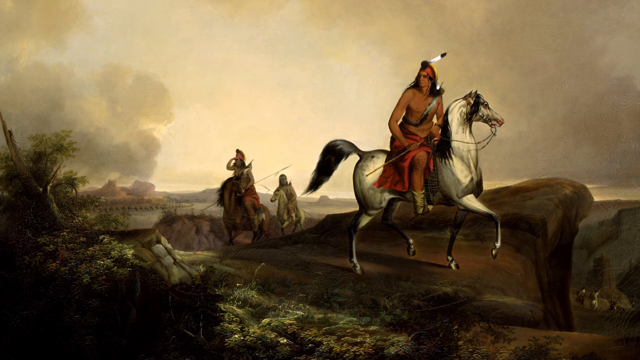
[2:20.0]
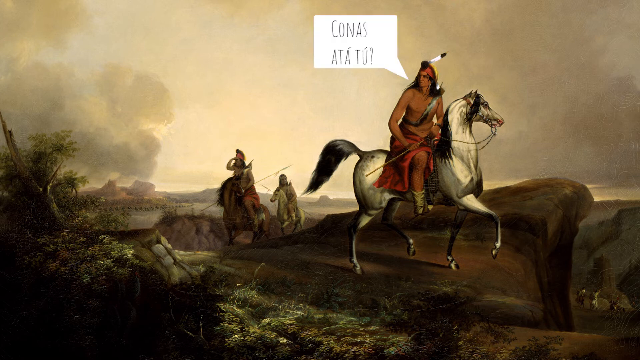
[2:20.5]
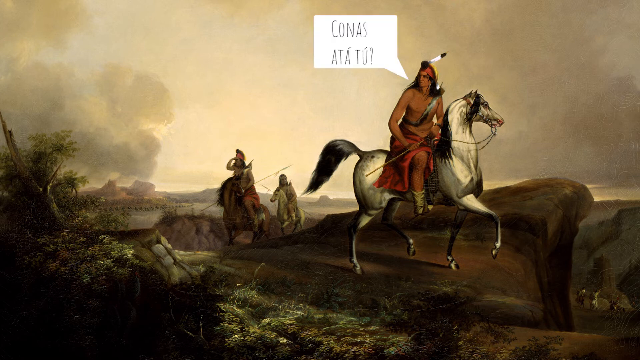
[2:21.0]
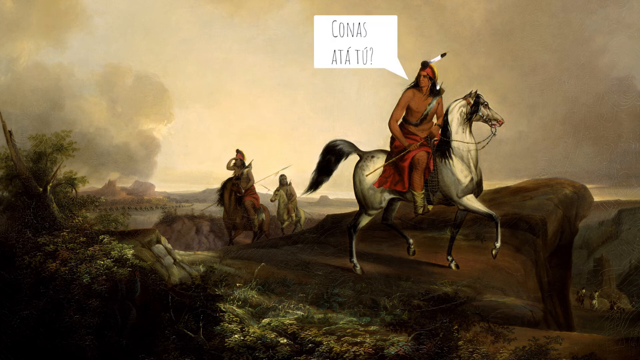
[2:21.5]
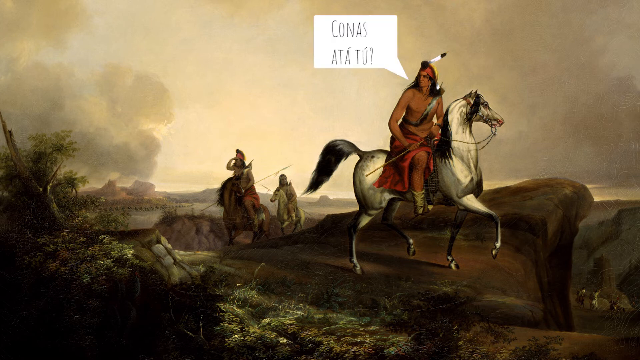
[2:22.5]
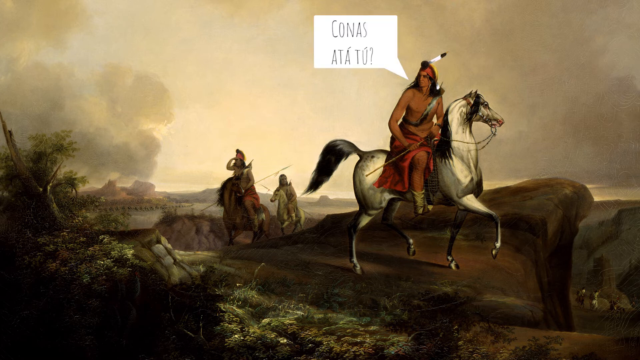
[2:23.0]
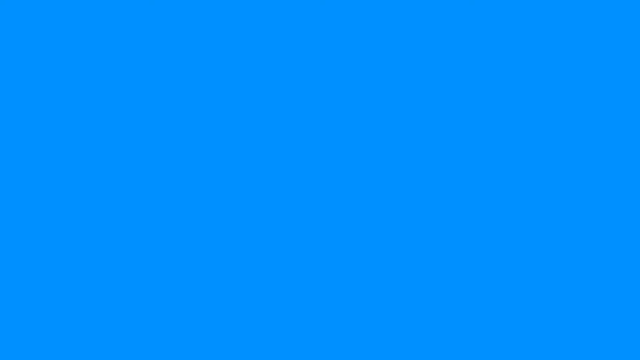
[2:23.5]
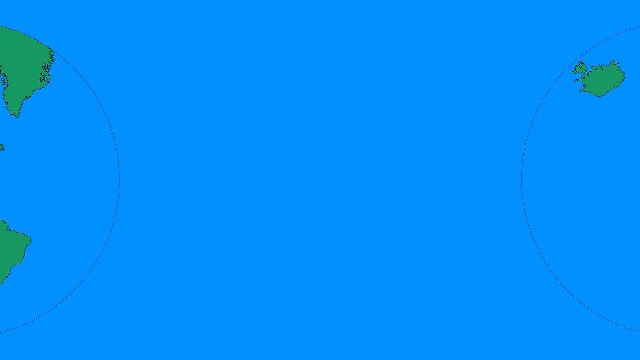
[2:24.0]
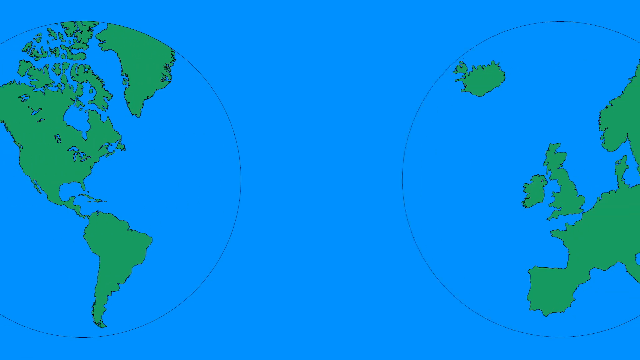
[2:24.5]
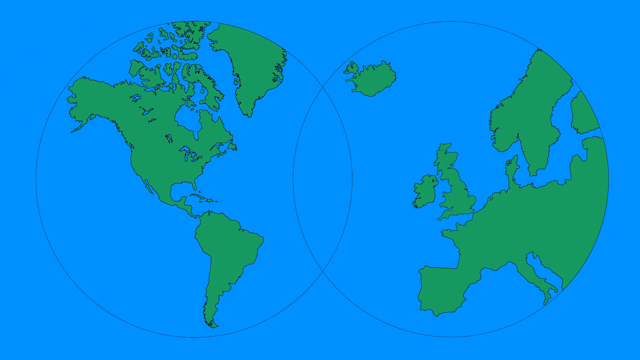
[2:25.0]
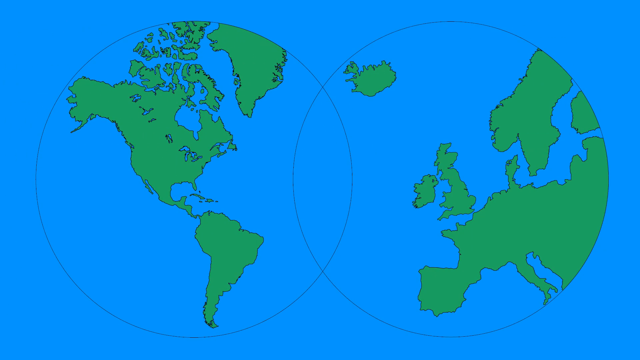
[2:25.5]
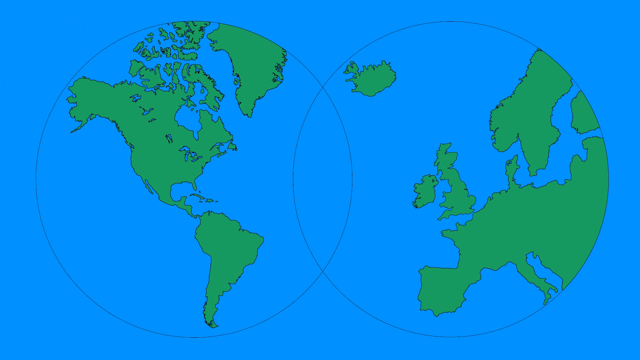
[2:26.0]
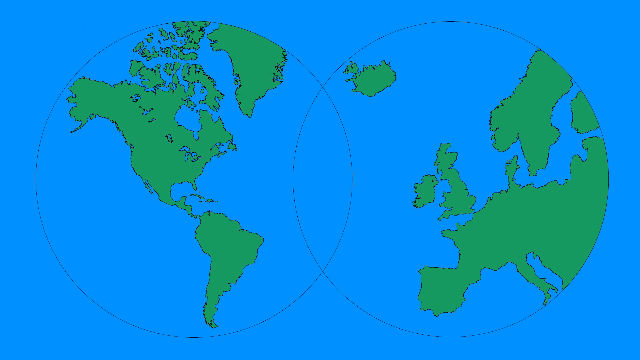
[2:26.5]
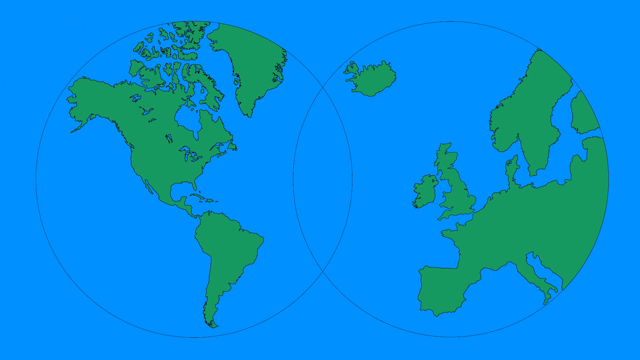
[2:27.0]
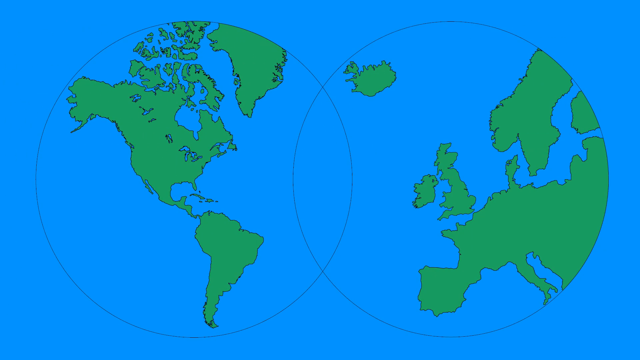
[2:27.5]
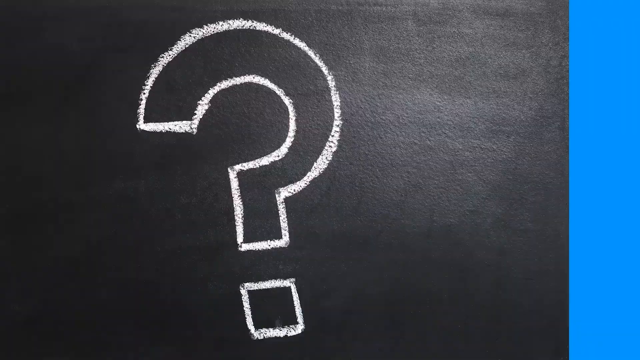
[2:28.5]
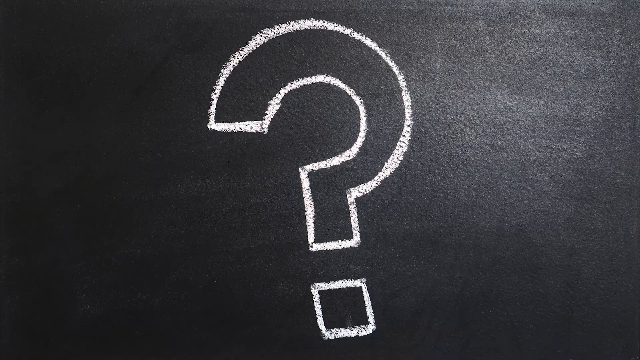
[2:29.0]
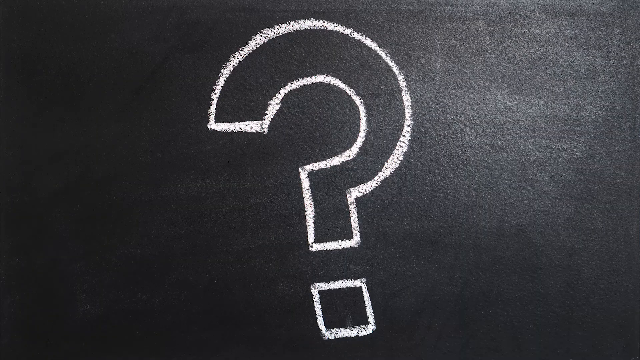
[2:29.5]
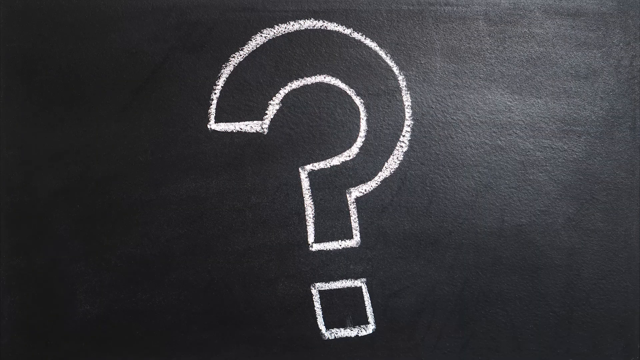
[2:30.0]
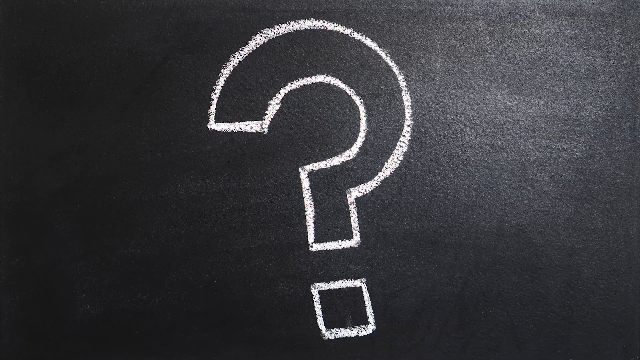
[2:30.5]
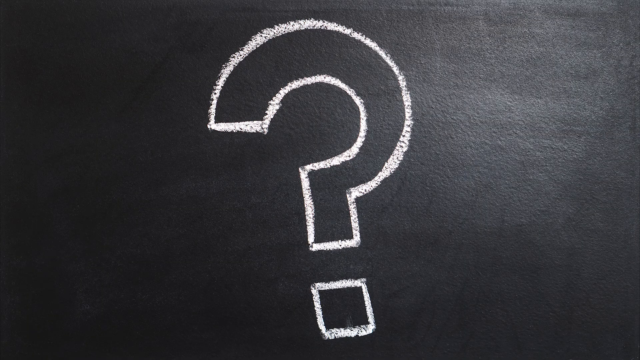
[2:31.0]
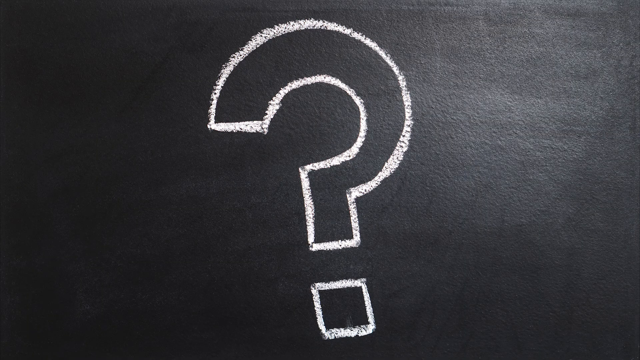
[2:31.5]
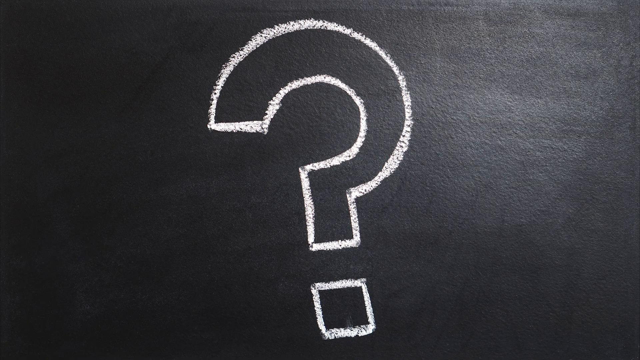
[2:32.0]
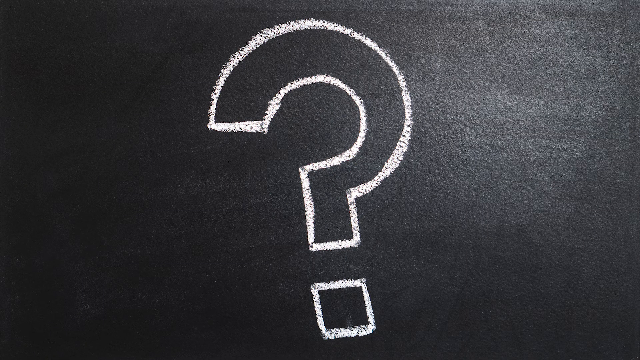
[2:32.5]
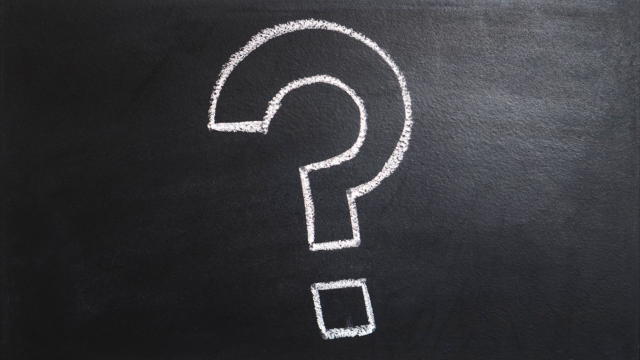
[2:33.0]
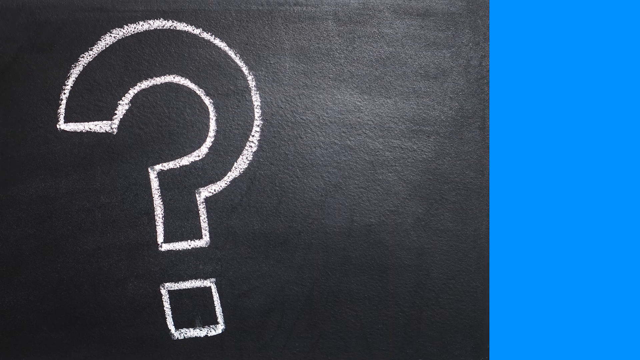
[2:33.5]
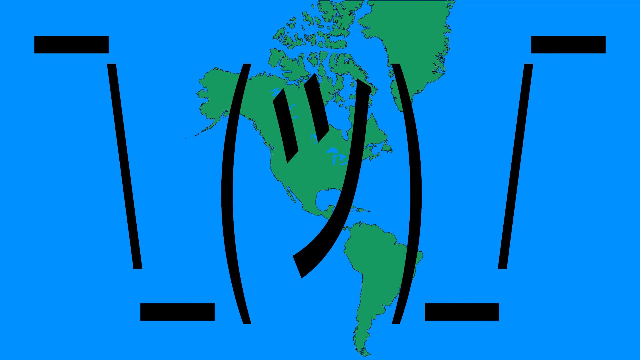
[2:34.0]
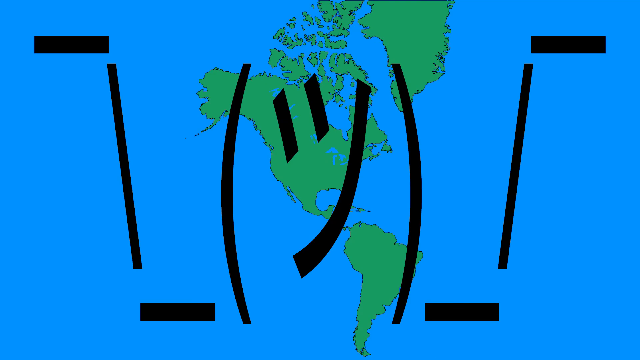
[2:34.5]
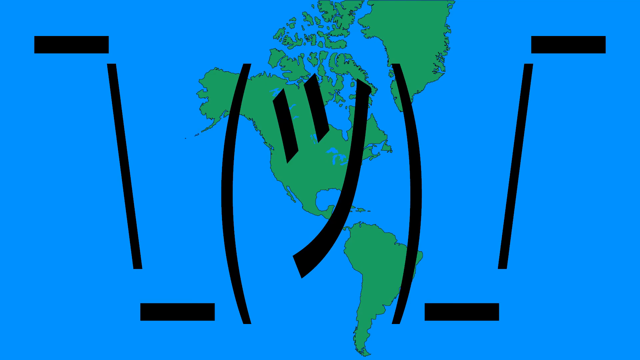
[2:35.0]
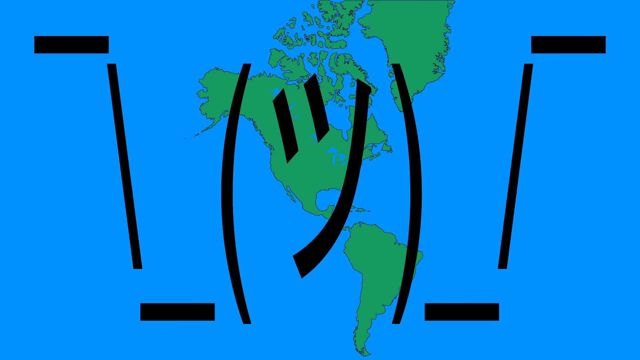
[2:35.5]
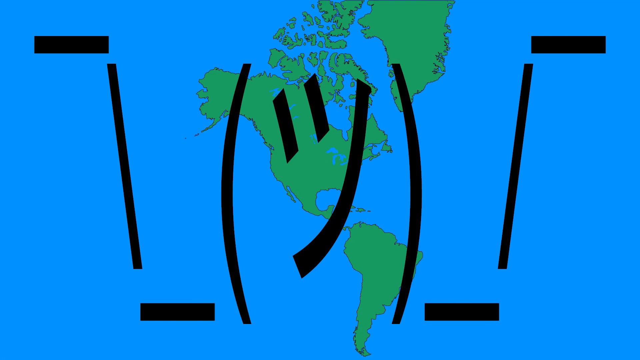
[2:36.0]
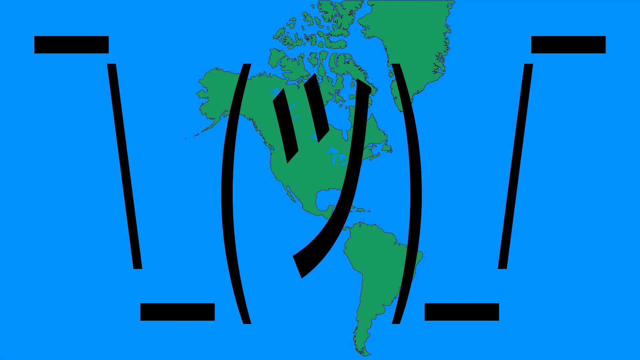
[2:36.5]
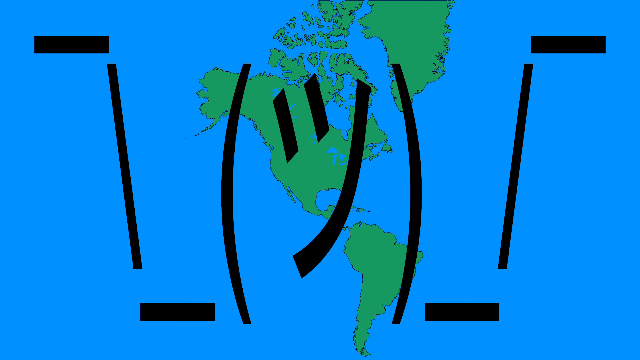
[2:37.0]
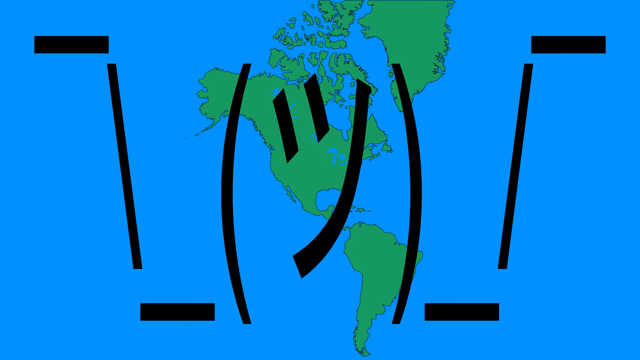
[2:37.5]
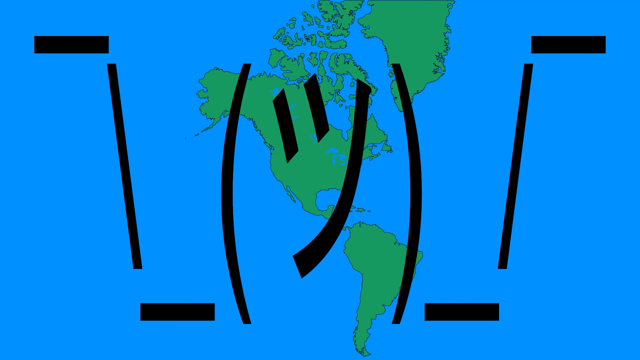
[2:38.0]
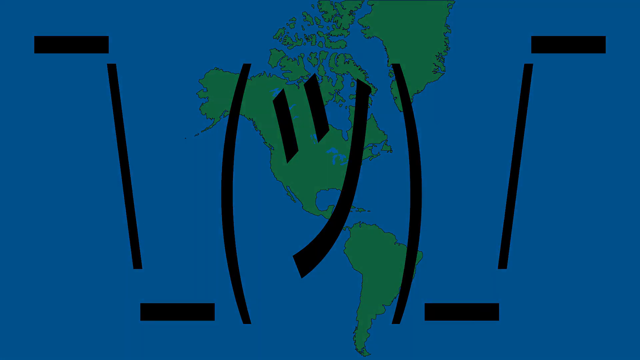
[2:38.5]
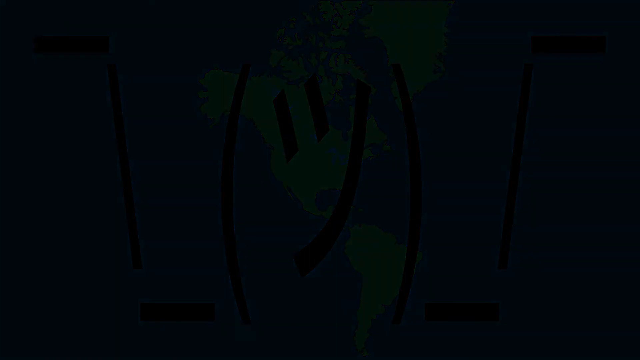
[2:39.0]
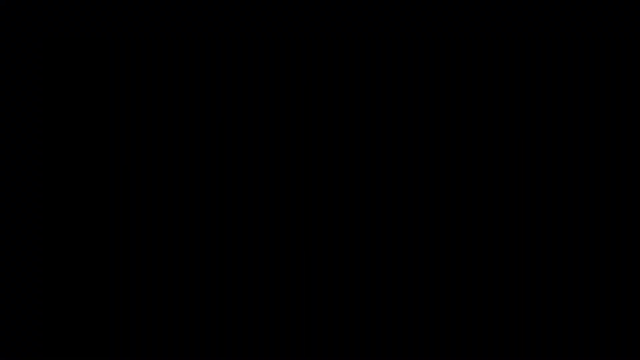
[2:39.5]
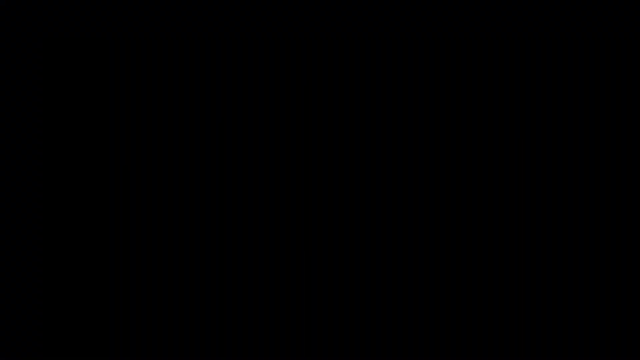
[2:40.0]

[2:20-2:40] A painting shows Indians riding through the plains of the Americas, with their village in the distance and smoke coming out of the top of it. In the foreground, the Indian in the lead rides a white horse with a black tail and has one feather coming out of the headdress he wears. Behind him are two other horses with people riding them. Text above him says "Kona's a-tu-tu." Next comes a depiction of the world: on the left are the North and South American continents, including Greenland on the upper right, and on the other side of the map, in a circle, are Iceland, the British Isles including Ireland, and the west coast of Europe. A large question mark then appears on a black background. The video ends with a smiley face with the North and South American continents behind it and the oceans to the right and left of them.